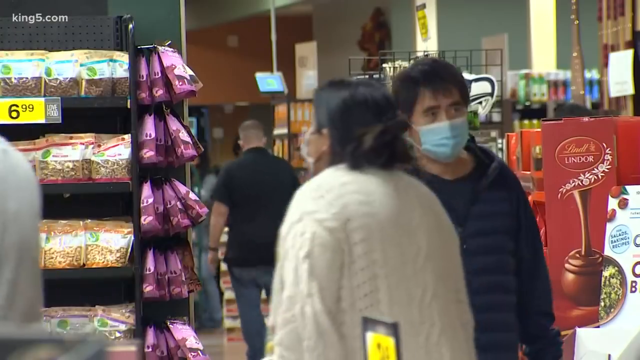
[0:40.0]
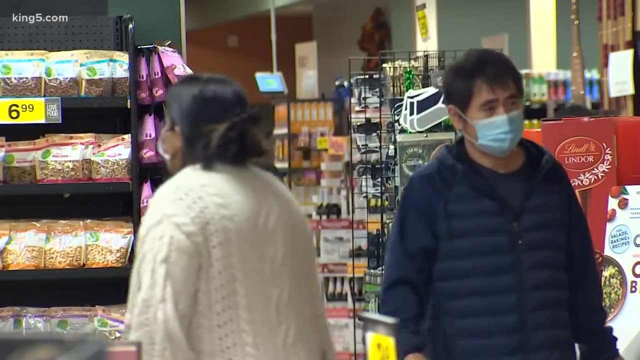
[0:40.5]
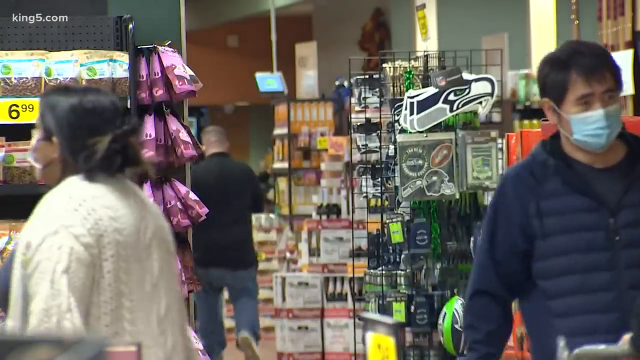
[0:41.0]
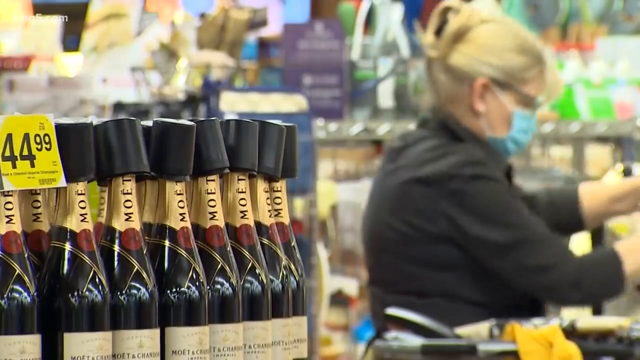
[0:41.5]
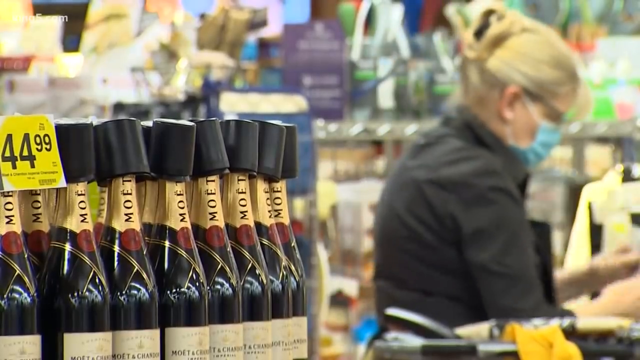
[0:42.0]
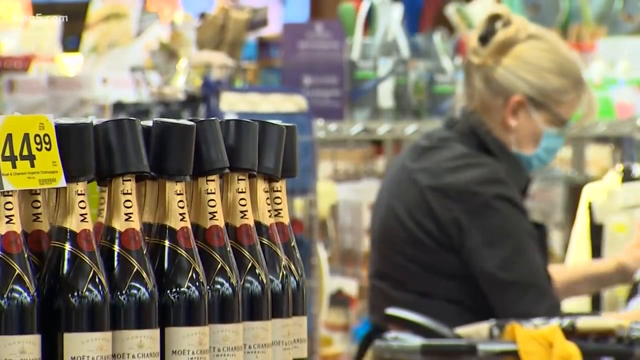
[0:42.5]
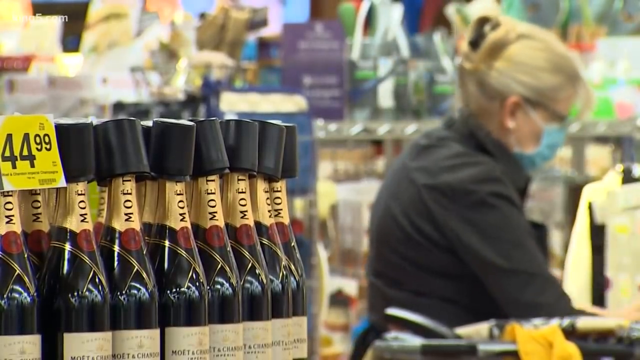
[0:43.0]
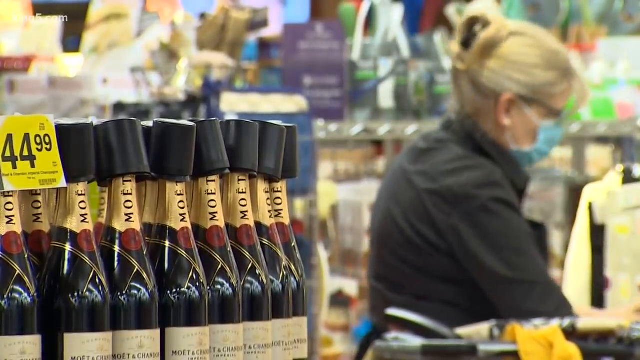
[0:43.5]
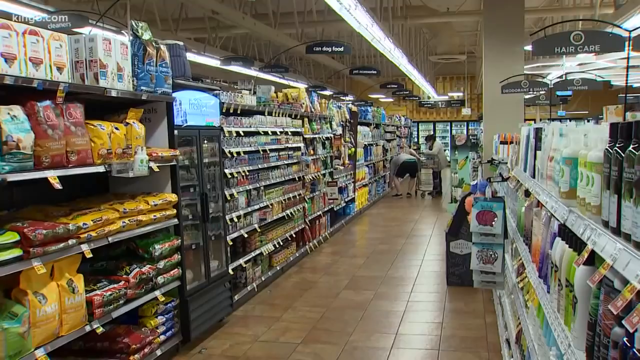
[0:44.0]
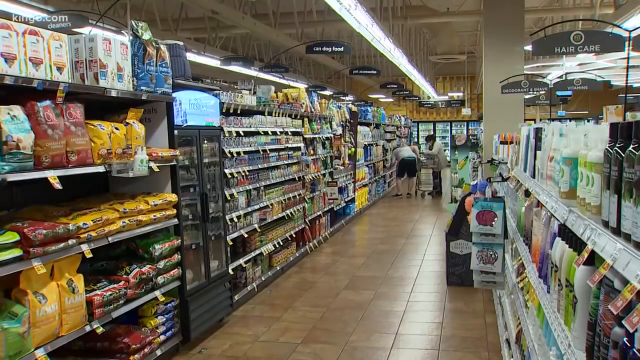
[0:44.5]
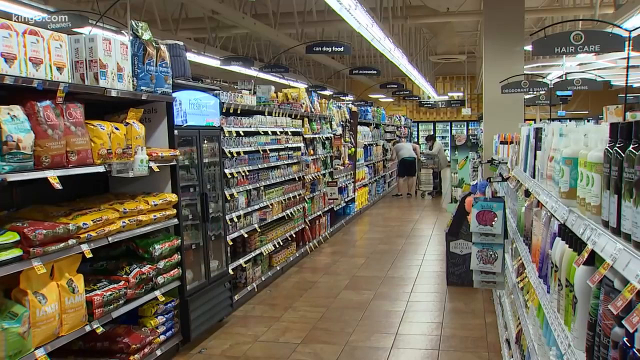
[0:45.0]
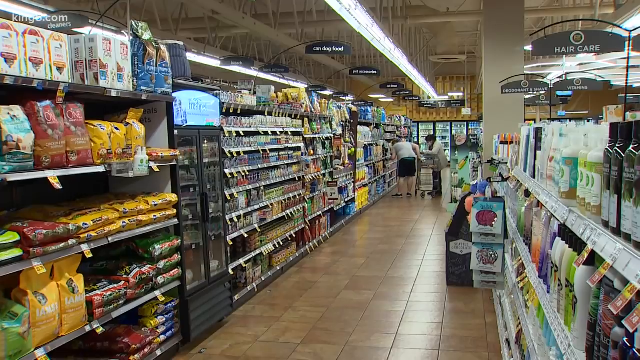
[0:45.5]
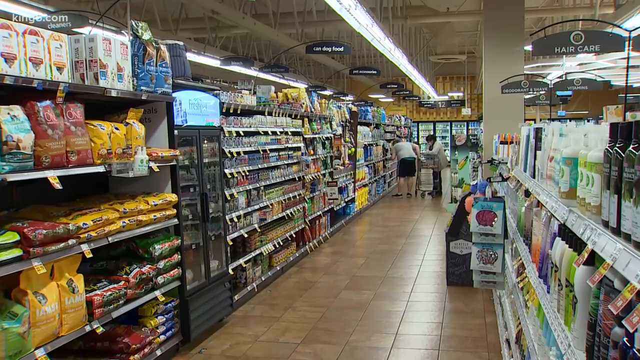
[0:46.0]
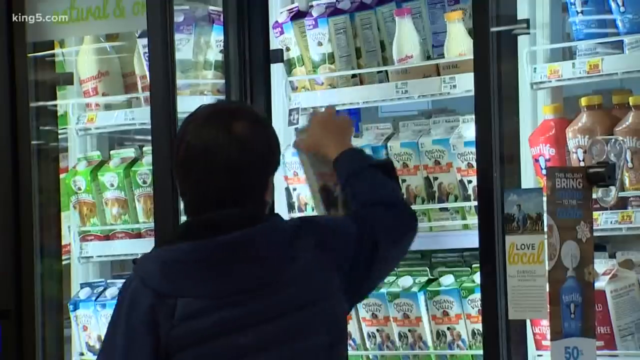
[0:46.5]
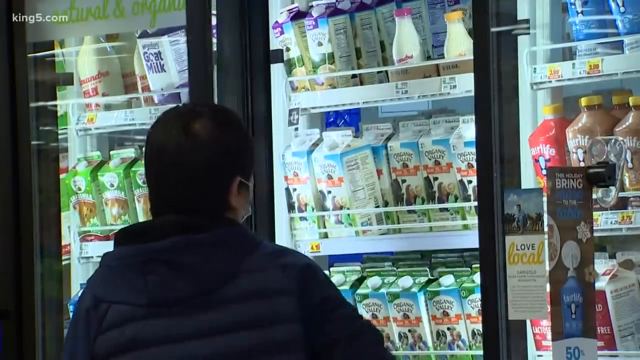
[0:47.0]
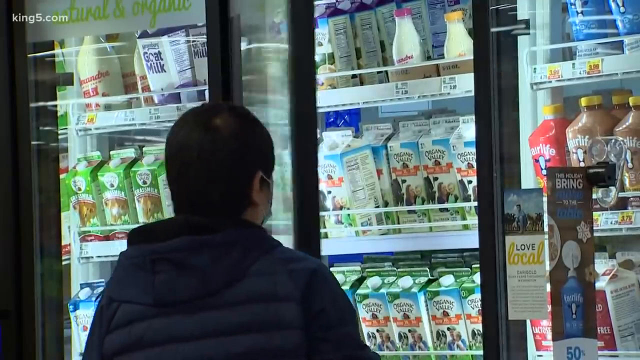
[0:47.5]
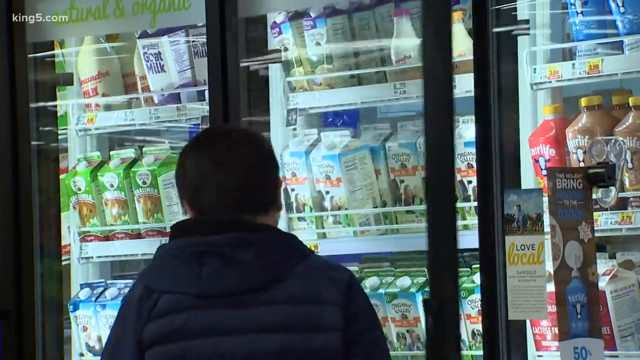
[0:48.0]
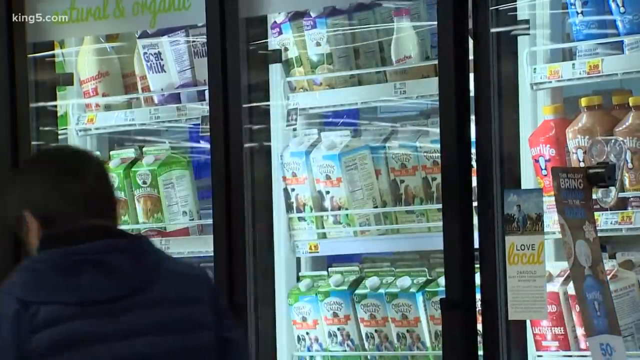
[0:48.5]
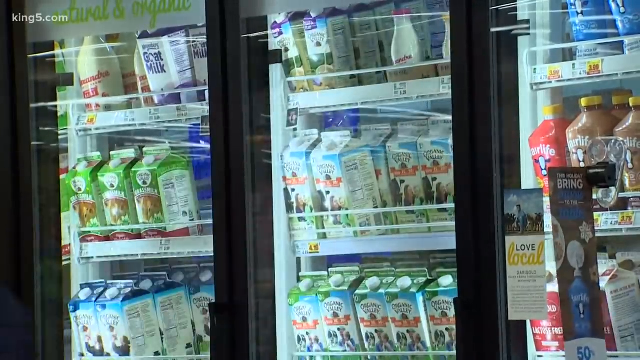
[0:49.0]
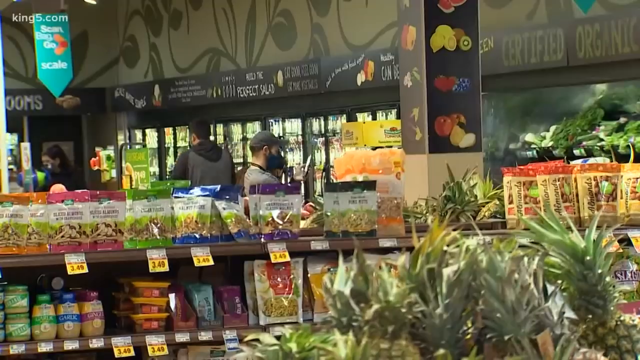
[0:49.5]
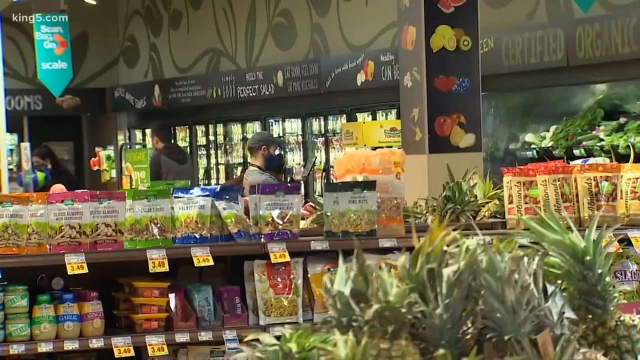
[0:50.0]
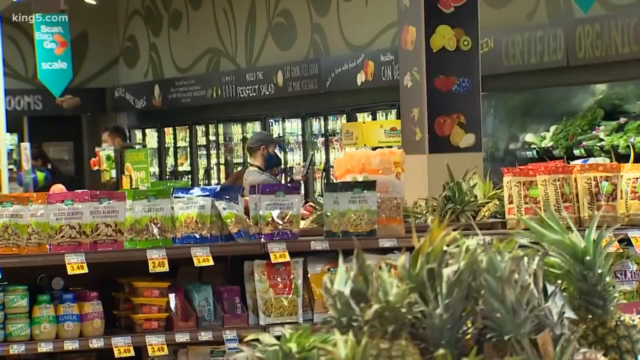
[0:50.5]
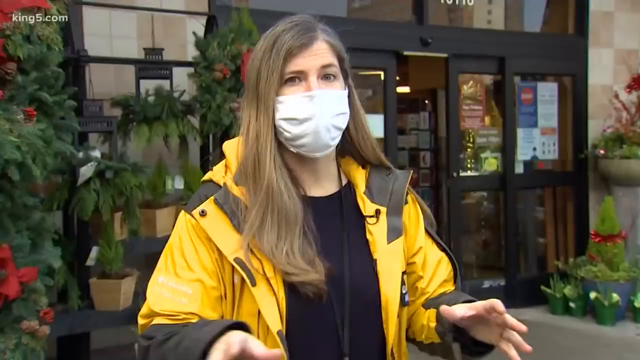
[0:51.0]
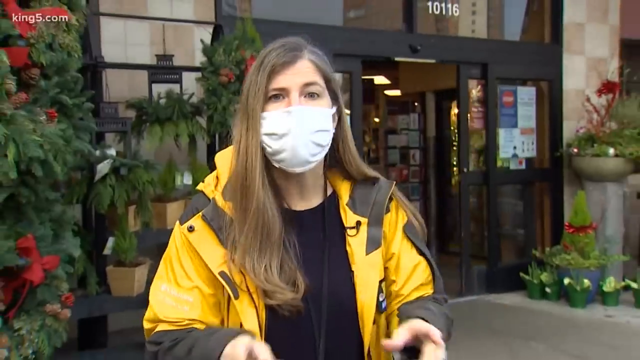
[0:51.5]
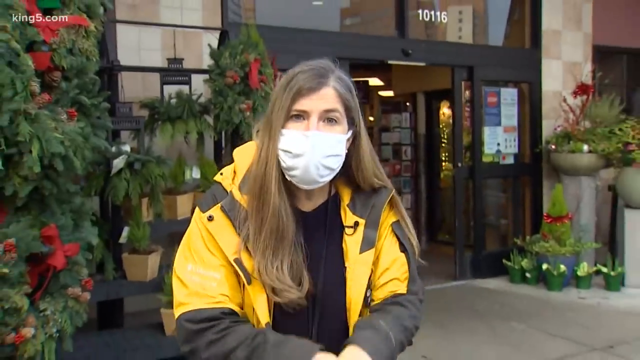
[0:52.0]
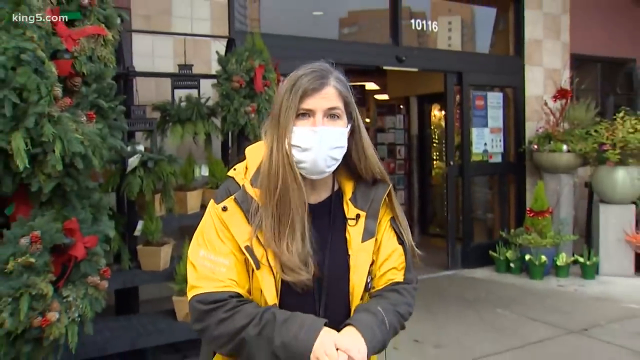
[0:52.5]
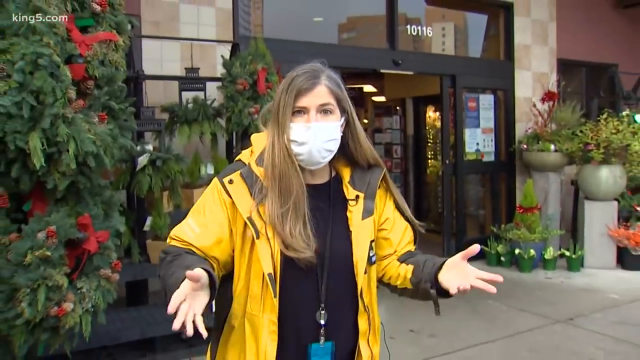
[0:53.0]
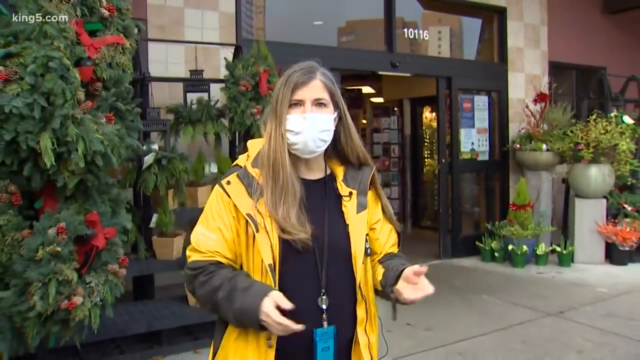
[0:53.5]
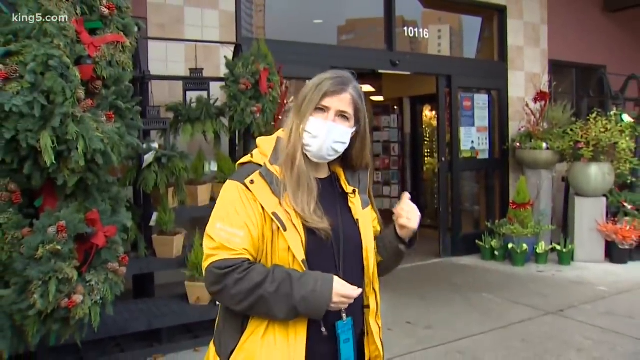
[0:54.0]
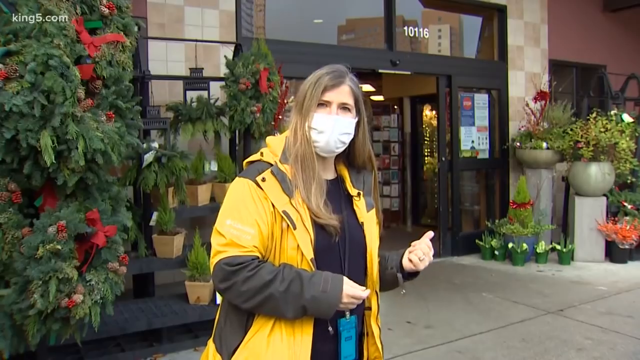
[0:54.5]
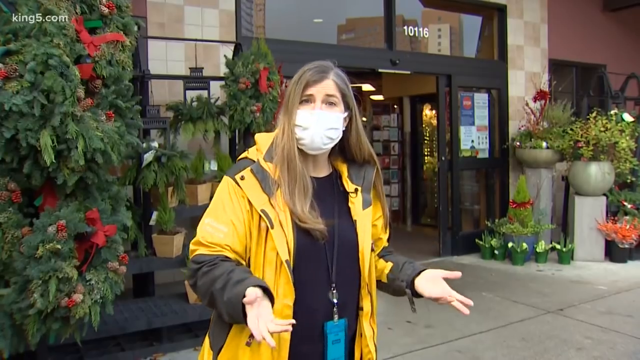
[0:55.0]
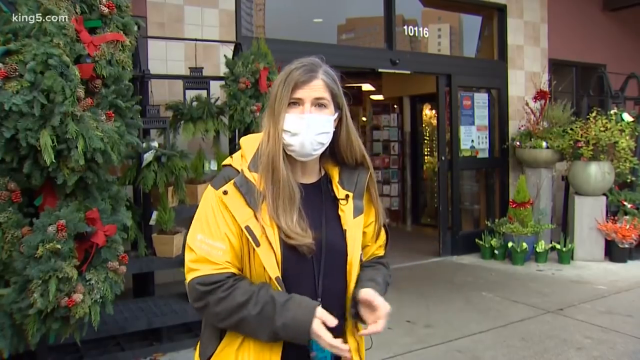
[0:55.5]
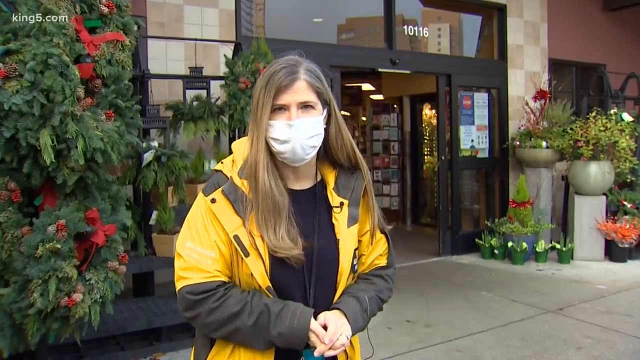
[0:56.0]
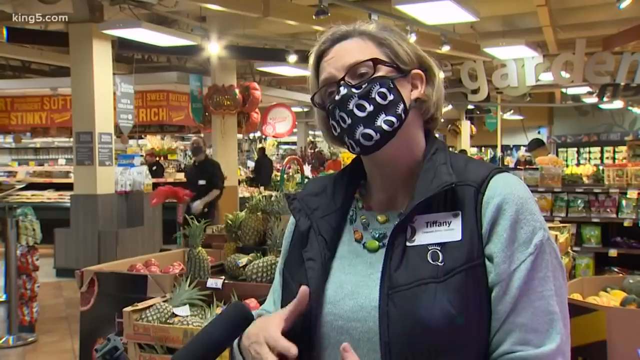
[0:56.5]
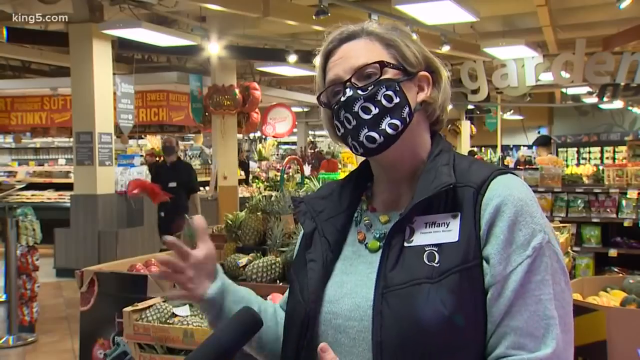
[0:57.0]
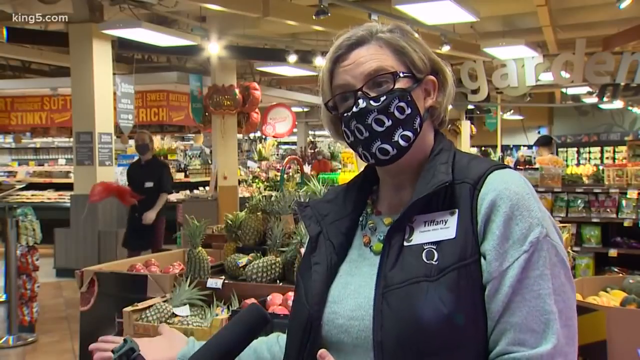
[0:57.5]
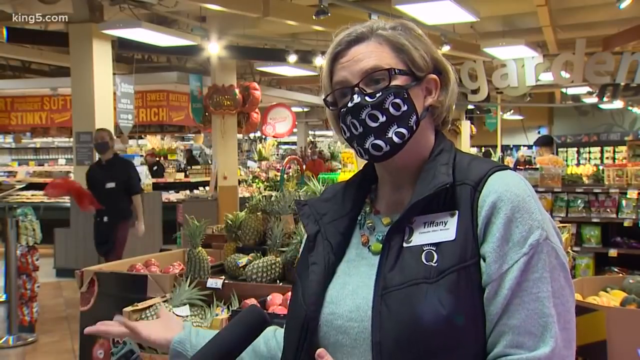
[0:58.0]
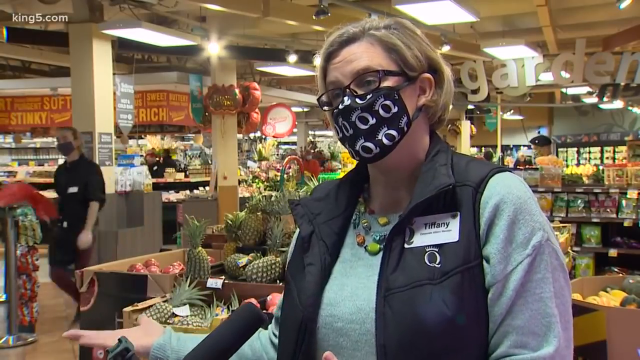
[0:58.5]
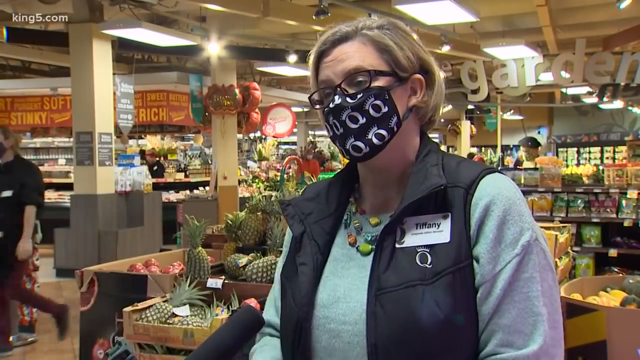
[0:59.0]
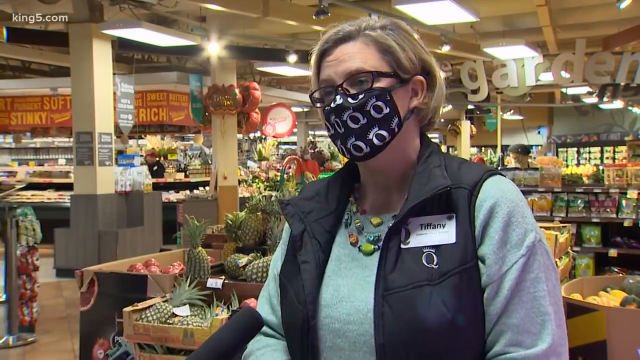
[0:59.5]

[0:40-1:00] People keep walking around from the same angle until the view switches to a close-up of some alcohol bottles on the left side, which the camera is focused on, with a blurry background. In the blurry background, a worker wearing a blue mask does some work to the right side behind the bottles. It cuts to another aisle with some shoppers, where somebody bends over to grab something on the bottom shelf and another person with a shopping cart is behind them; it looks like the pet aisle, with hair care on the other side. Another angle shows somebody reaching into a freezer section, grabbing some organic milk off the shelf and closing the door. A different aisle shows more shoppers. Then a woman outside speaks about the store towards the camera; she wears a white mask and a bright yellow jacket with a blue undershirt and has long, light brown hair. It cuts back to the lady with the black and white Q mask and name tag inside. At the very end, another angle of the inside of the store slowly begins to pan to the right.